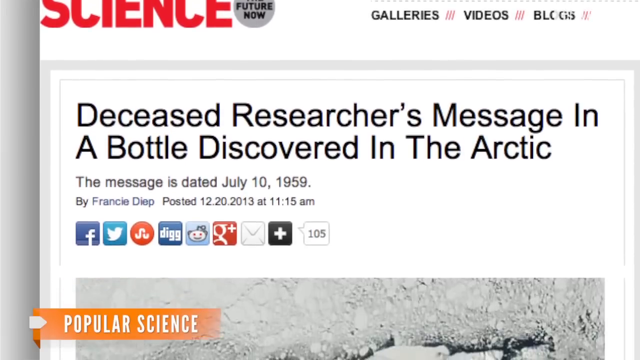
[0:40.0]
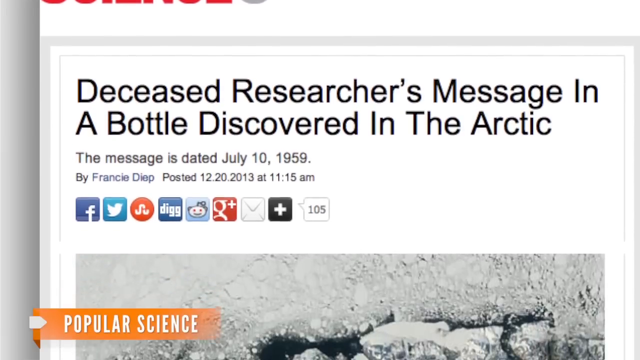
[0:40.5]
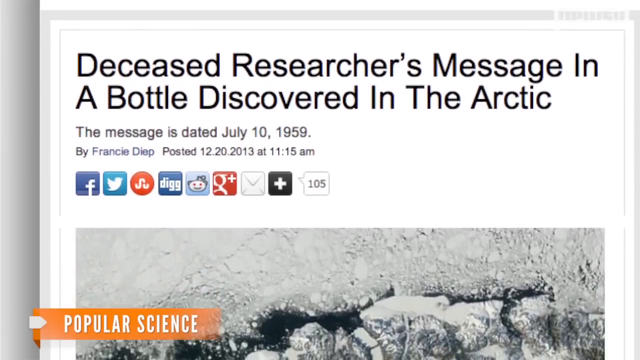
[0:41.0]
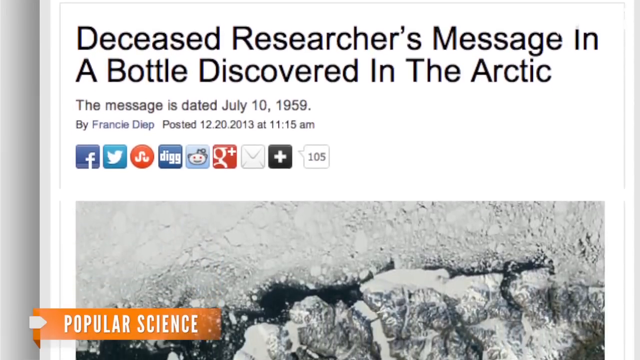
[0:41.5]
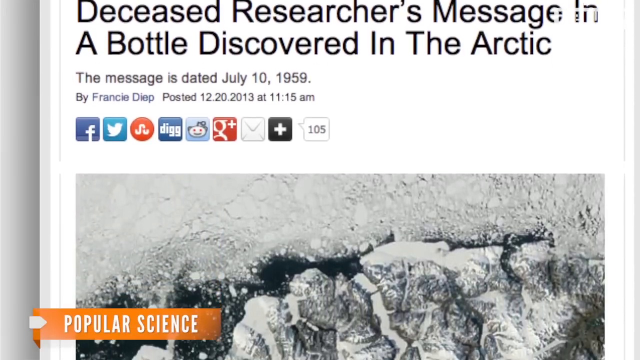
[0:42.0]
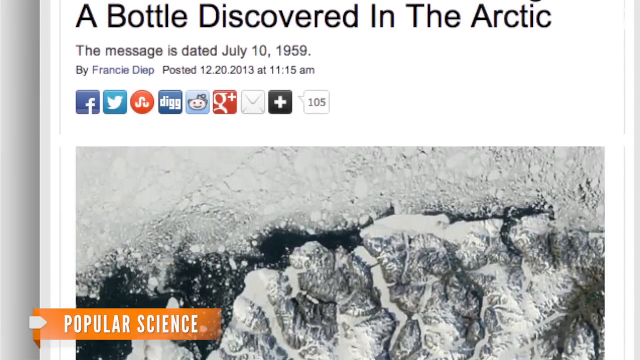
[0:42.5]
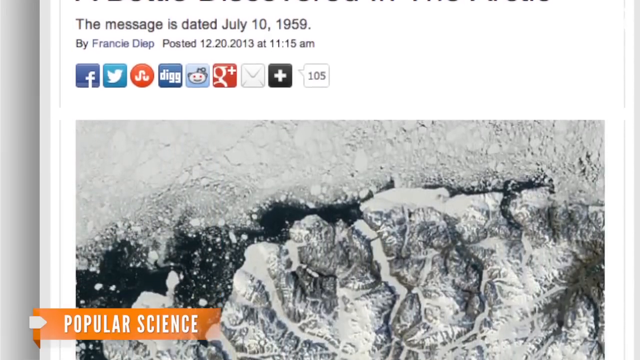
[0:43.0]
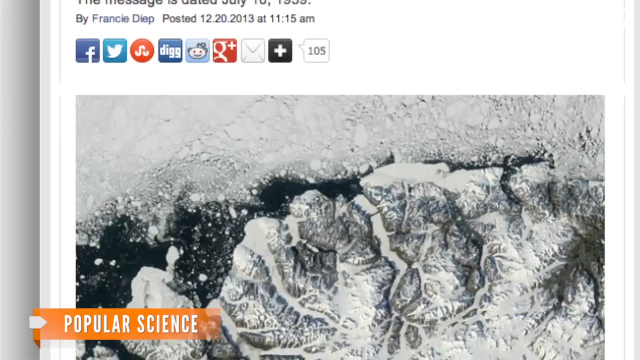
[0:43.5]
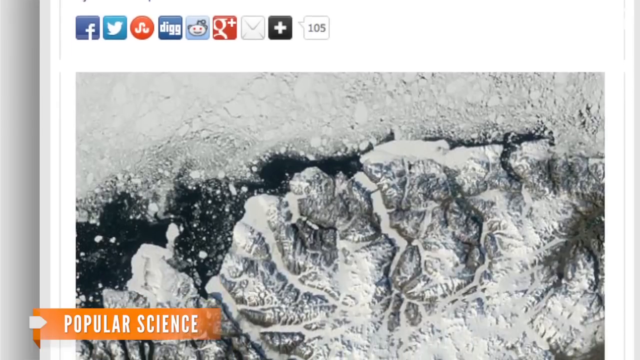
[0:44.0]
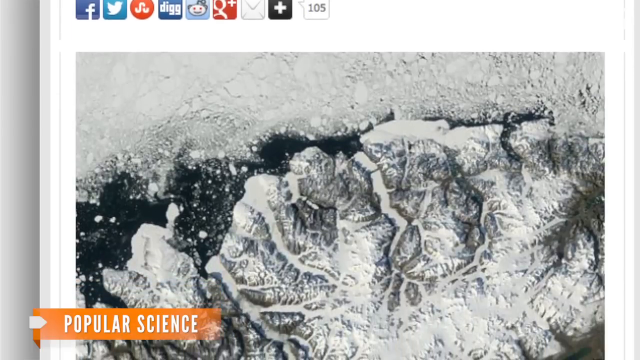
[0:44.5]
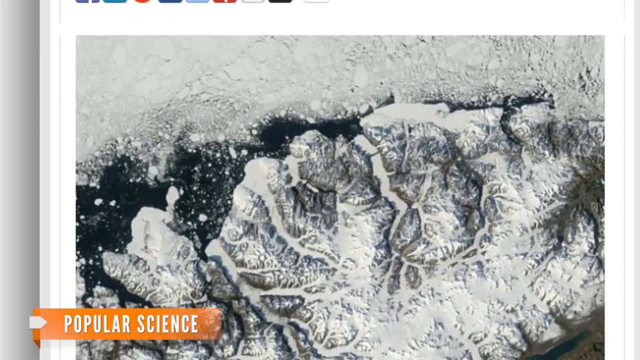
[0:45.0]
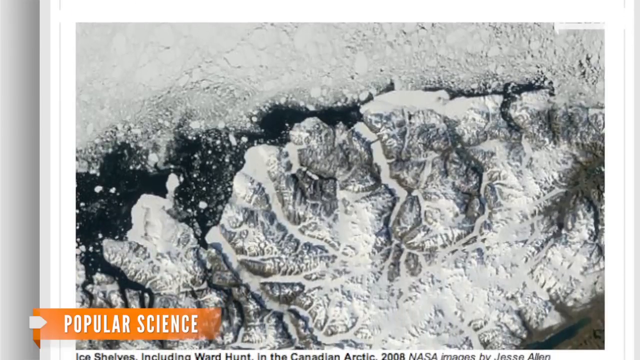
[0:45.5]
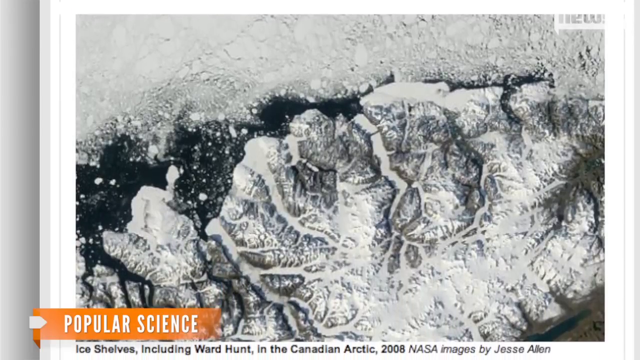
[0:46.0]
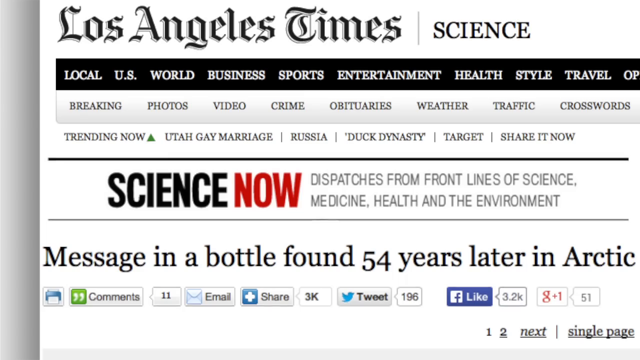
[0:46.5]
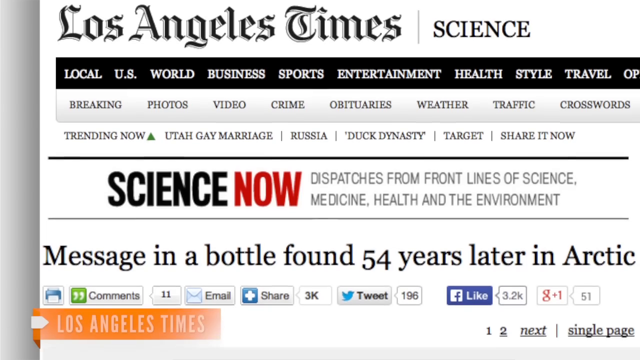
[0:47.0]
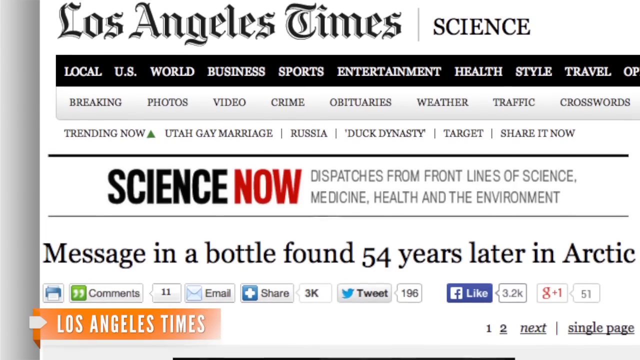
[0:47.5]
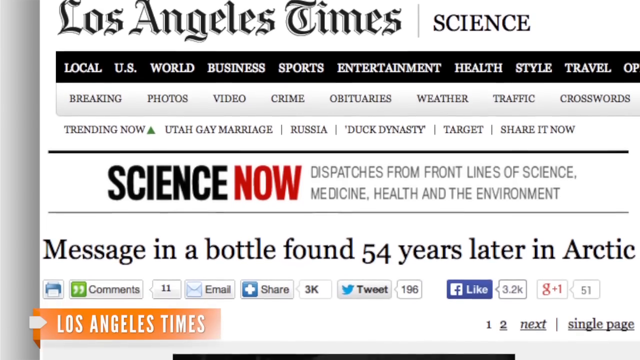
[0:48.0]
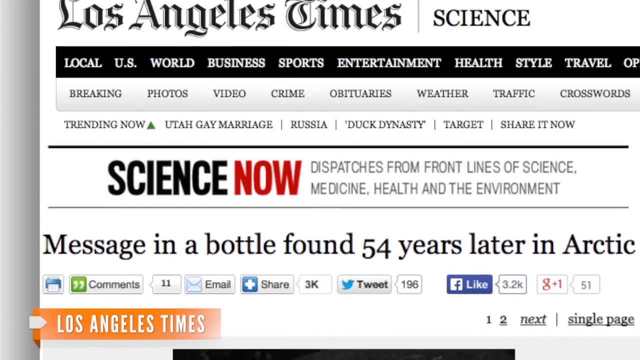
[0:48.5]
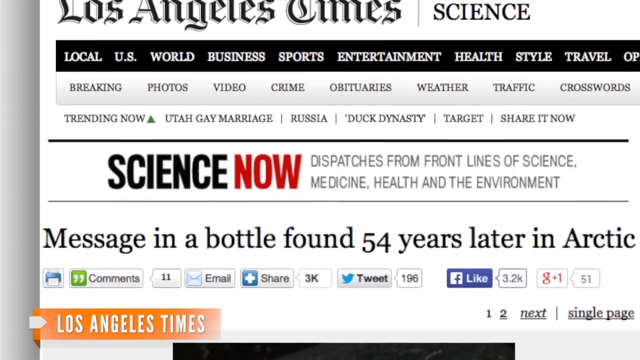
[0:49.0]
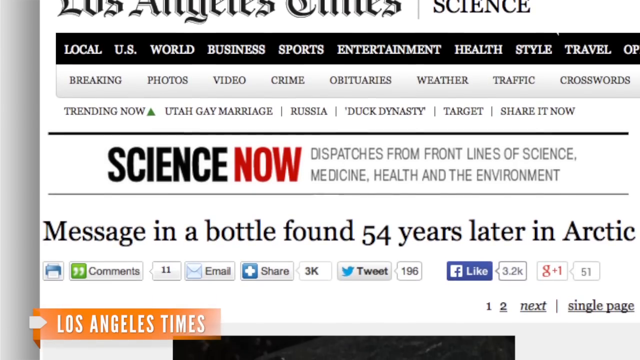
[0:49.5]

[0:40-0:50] The camera scrolls down the article headed "deceased researchers message in a bottle discovered in the Arctic." Beneath it, in smaller font, is "the message is dated July 10, 1959," and below that, in even smaller font, "by Francie Deep posted 12-20-2013 at 11-15 a.m." Underneath are icons for various social media sites. A photo scrolls into view, possibly of the glacier. Another article is then shown, from the science section of the Los Angeles Times, with the headline "message in a bottle found 54 years later in Arctic."